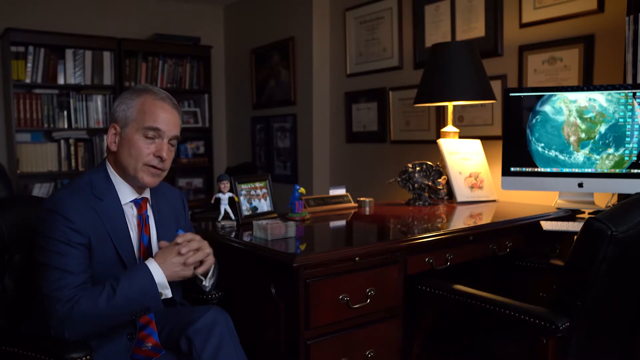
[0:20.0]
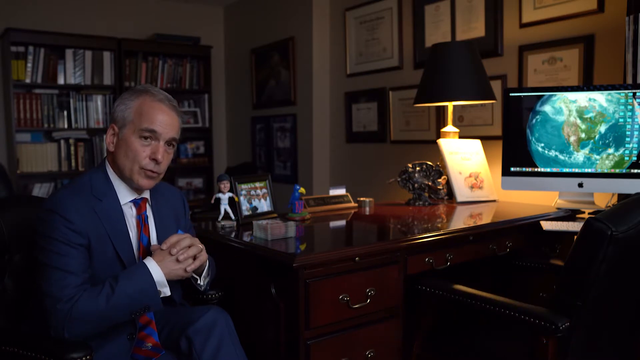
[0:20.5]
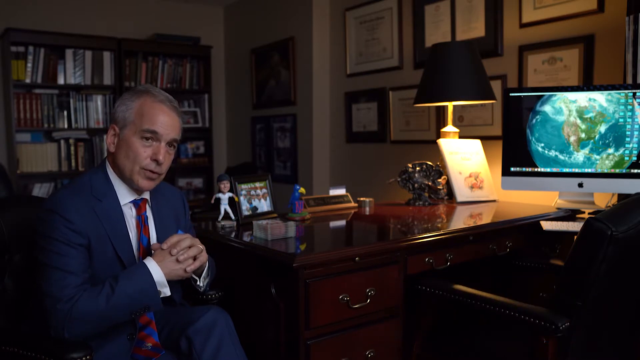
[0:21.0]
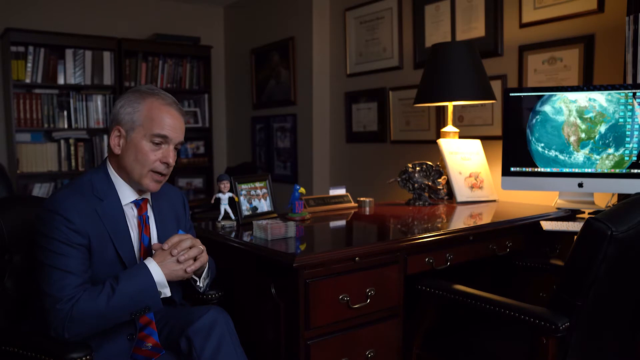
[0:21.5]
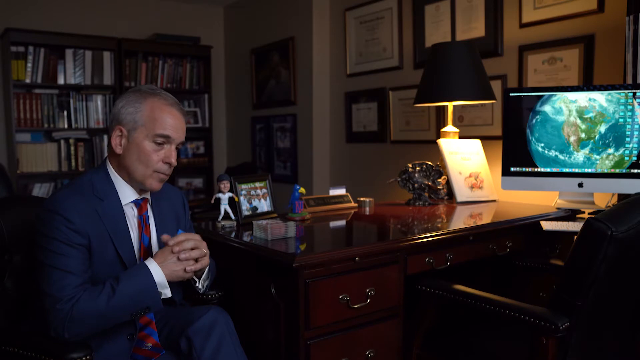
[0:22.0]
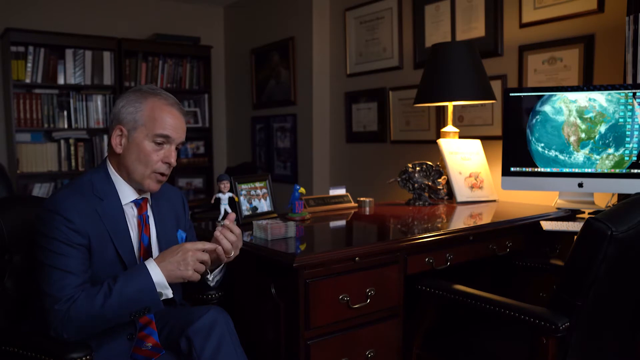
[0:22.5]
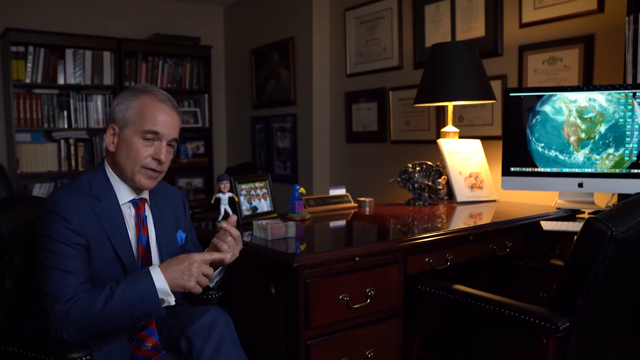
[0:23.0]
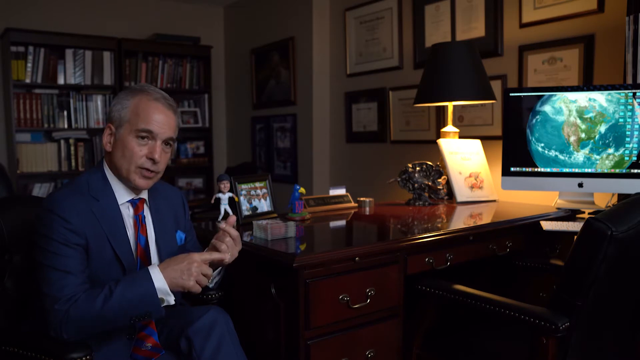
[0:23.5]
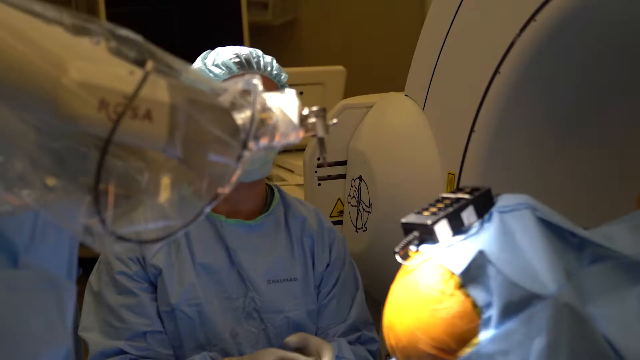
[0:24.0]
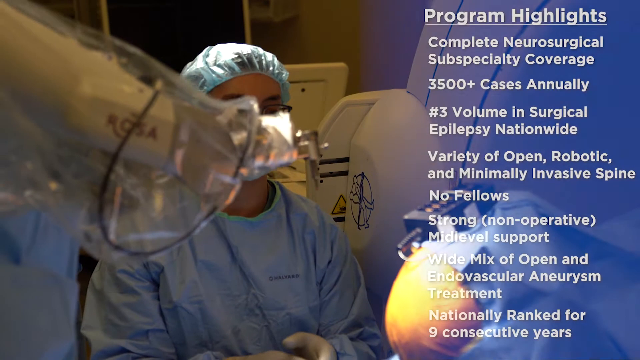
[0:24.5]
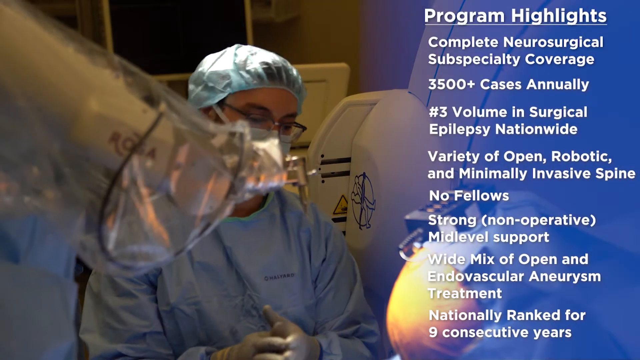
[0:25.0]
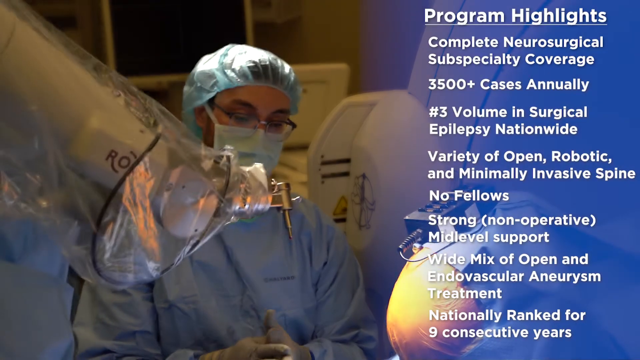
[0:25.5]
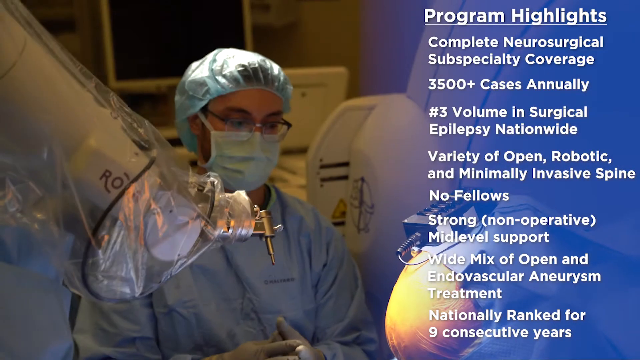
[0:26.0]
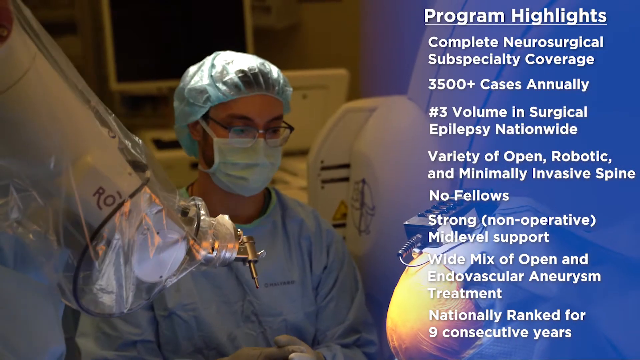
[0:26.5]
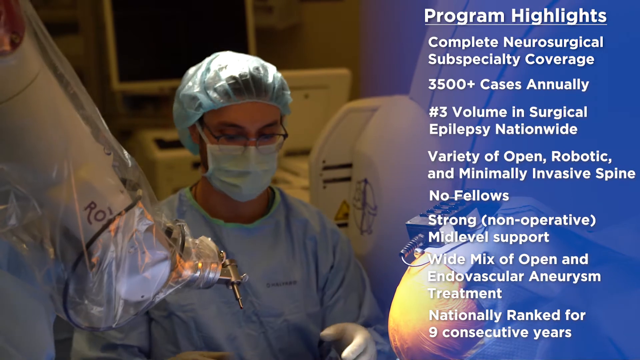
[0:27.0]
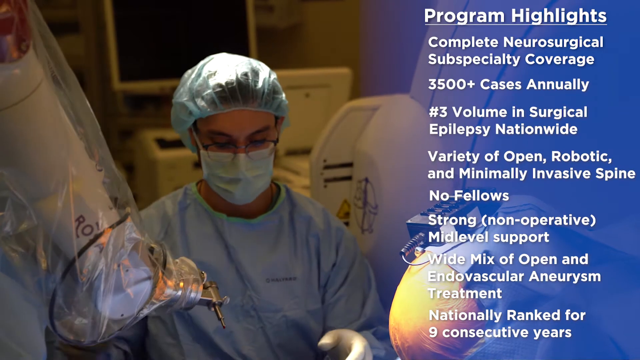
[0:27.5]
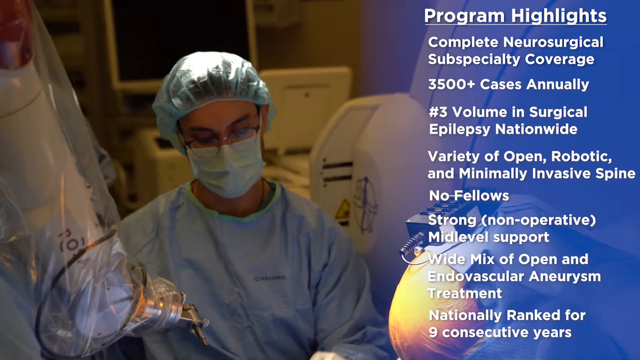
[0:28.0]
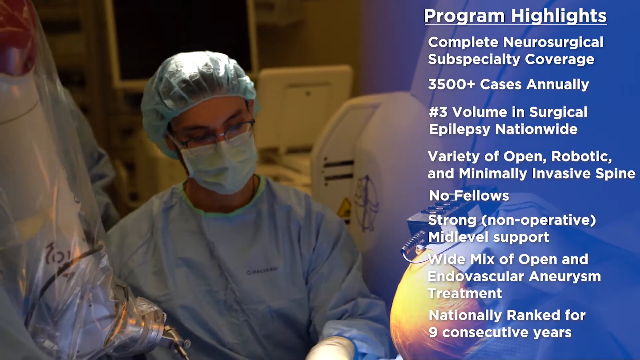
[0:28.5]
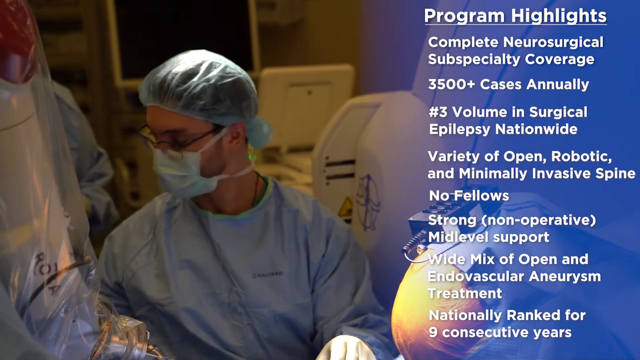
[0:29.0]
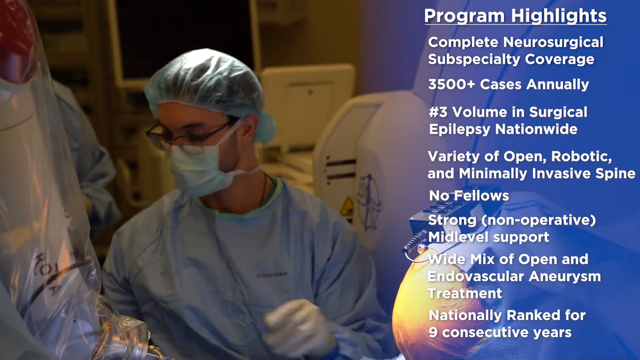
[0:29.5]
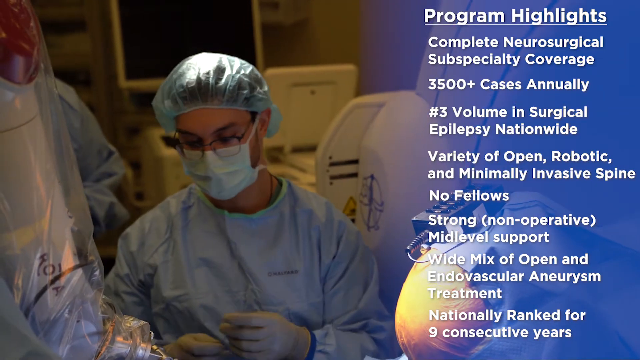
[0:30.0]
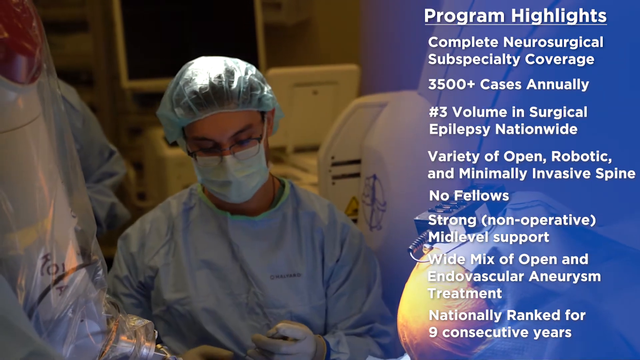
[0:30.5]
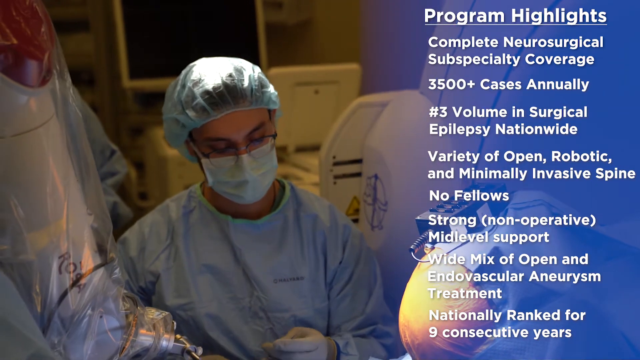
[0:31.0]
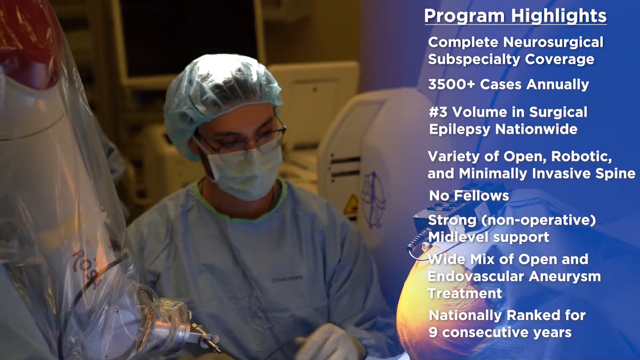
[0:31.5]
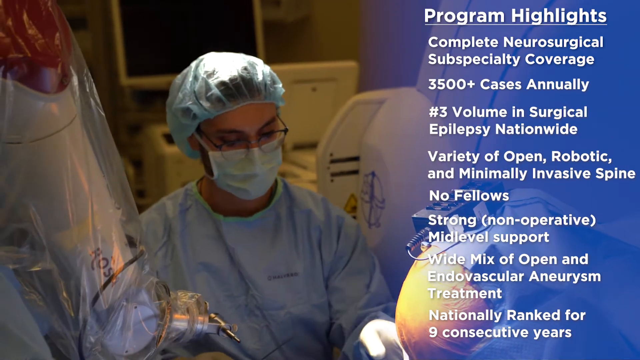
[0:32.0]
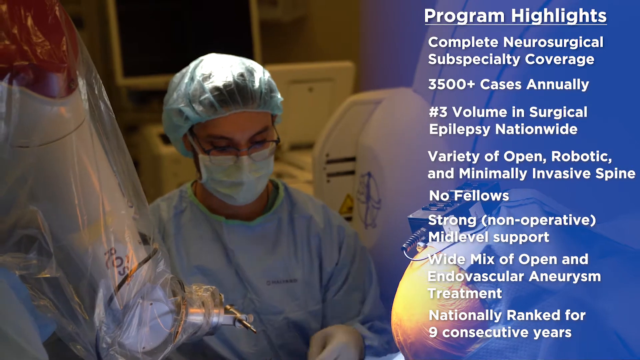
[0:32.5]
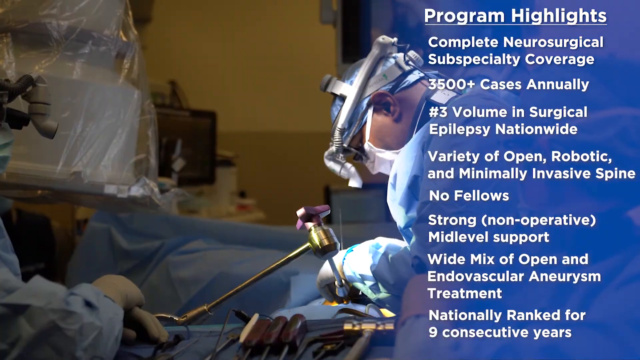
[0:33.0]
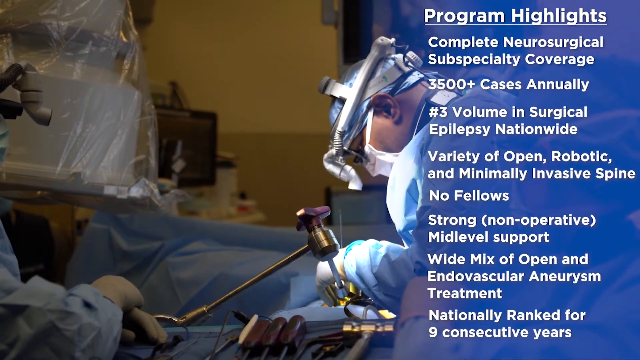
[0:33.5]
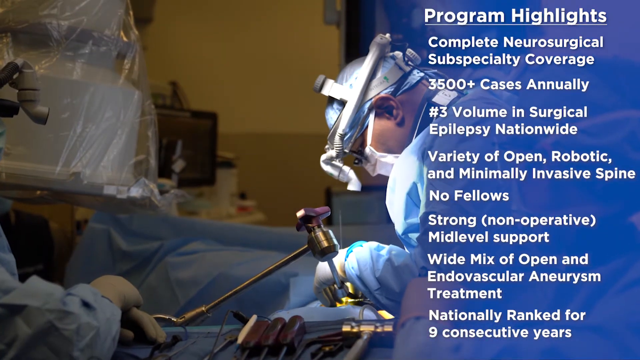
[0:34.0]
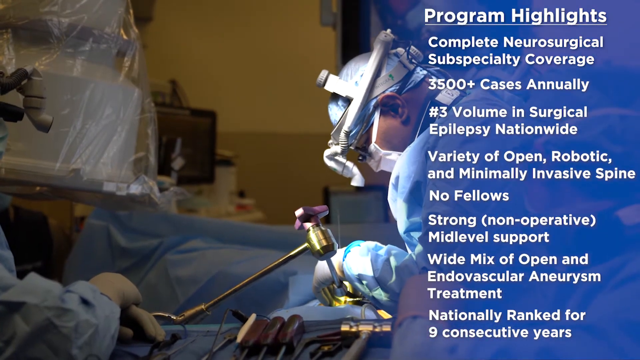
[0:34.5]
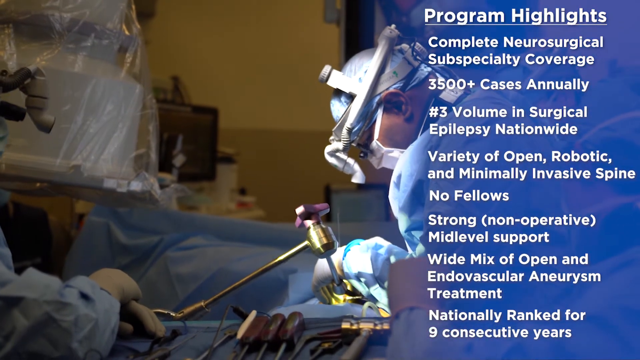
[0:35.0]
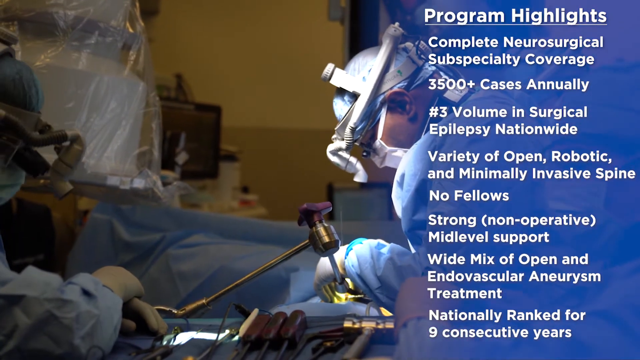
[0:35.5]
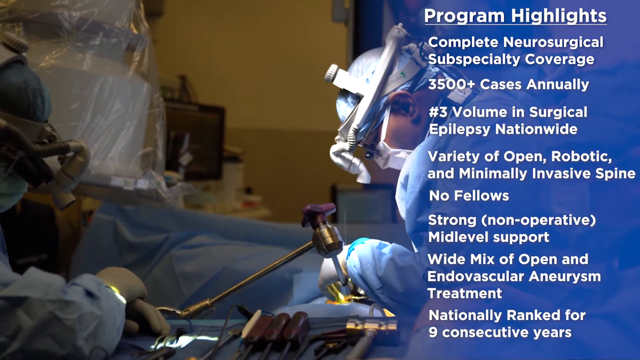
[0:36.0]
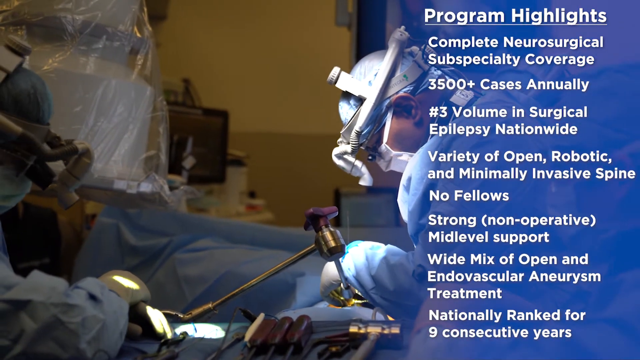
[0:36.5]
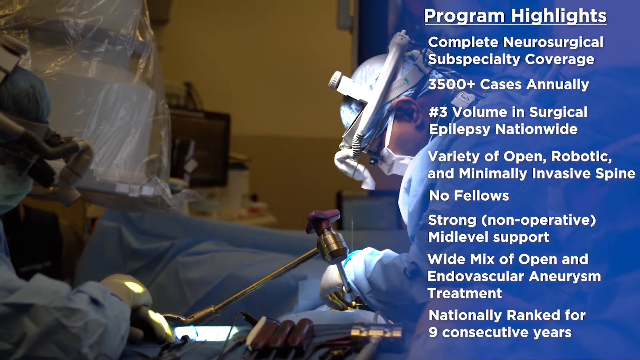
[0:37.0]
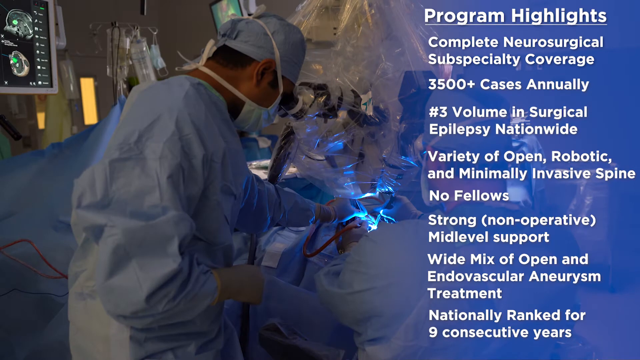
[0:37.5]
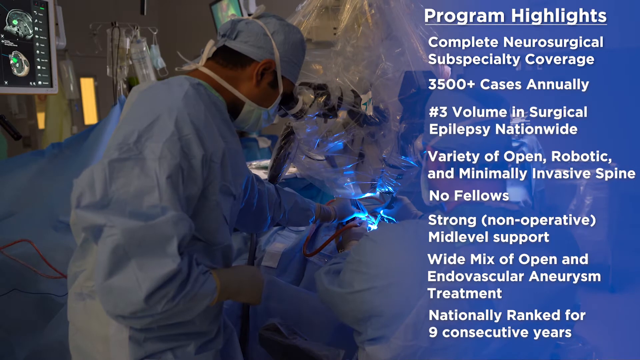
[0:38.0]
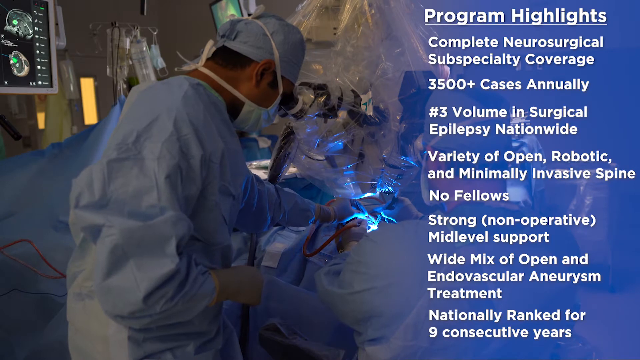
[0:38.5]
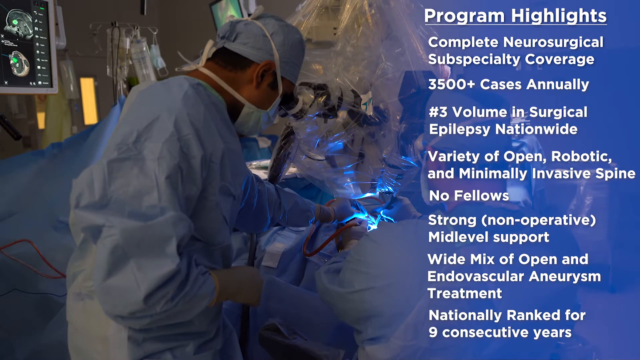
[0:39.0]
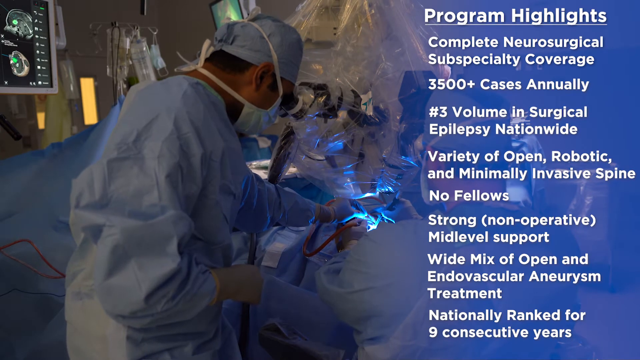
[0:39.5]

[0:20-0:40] The same man sits in his chair at the bottom left of the frame. He is an older white man with short gray hair, wearing a dark blue suit jacket, a white shirt and a red and blue tie, with his hands clasped in front of him. To his right is a large wooden desk with a monitor showing an image of the earth, a lamp to the left of the monitor that is turned on, a bobblehead and a portrait. In the background is a large bookcase full of books. On a white wall there are a number of portraits, about seven on the right side and two larger ones on the left side. The man talks toward someone off camera, his hands clasped, then slightly unclasps them and uses his right hand to point toward his left hand, which is sort of raised, as he keeps talking. The scene changes to a different person, a white doctor with glasses, wearing a doctor's mask, a sort of doctor's hat and a gown, looking downwards to the right. White text appears on the right side reading "program highlights", followed by a number of highlights in white text. On the left is a large machine, kind of like a machine arm, slowly moving downwards toward something off camera. The doctor turns his head to the left. The scene changes to a different doctor in the same outfit, looking downwards with his hands in front of him doing some type of operation. Another doctor on the left, with a light attached to their head, looks downwards to the right at the same area.